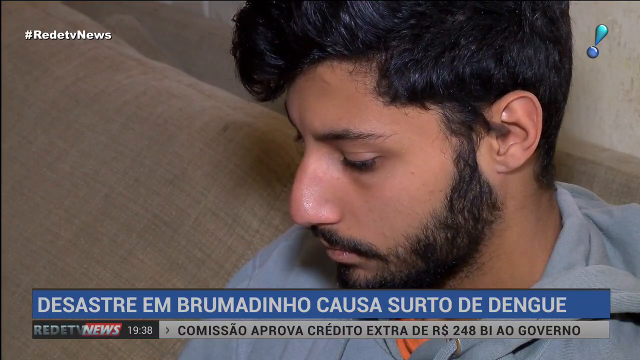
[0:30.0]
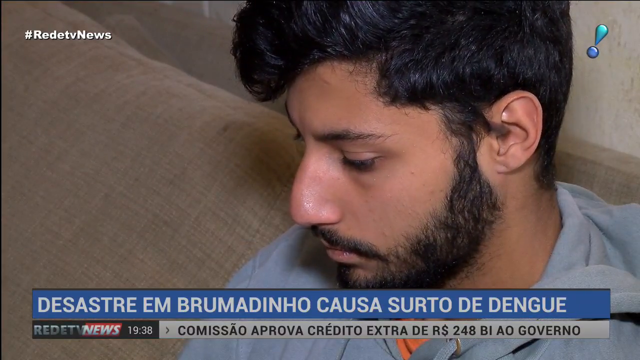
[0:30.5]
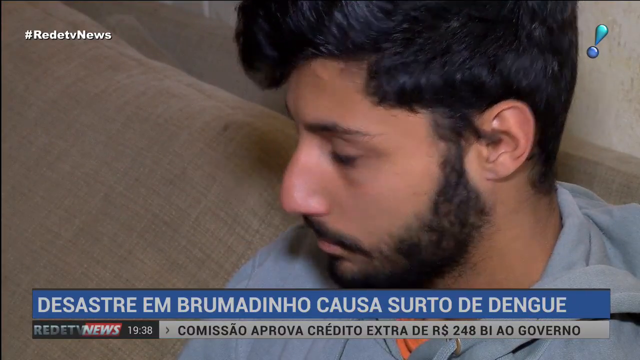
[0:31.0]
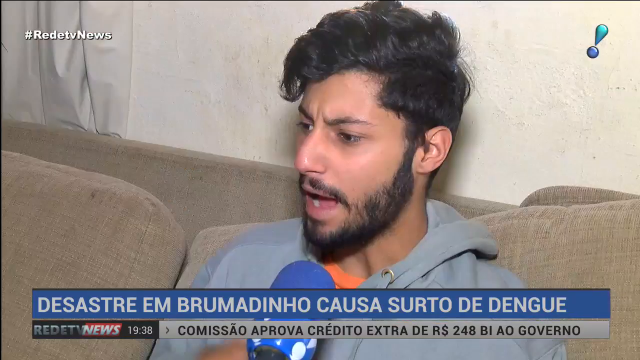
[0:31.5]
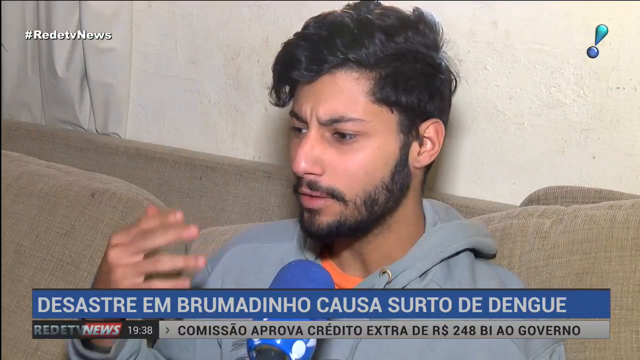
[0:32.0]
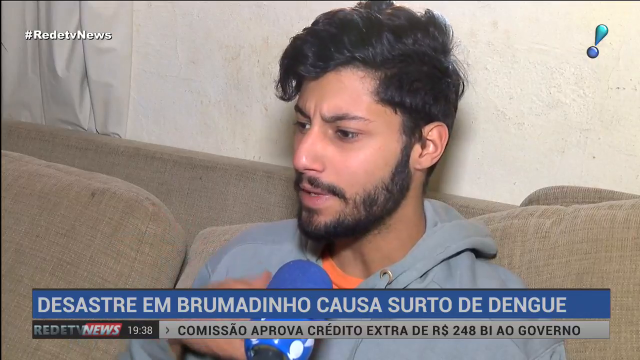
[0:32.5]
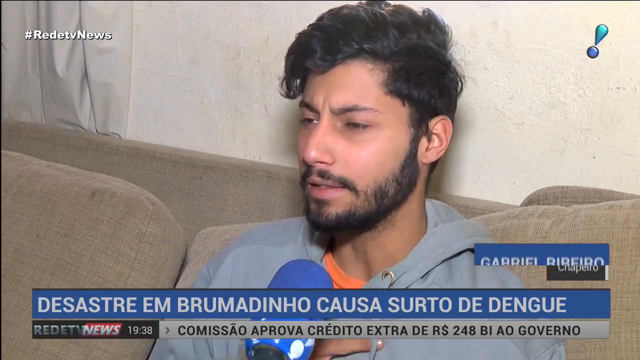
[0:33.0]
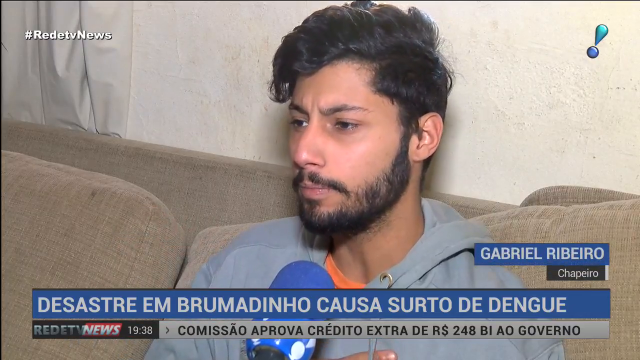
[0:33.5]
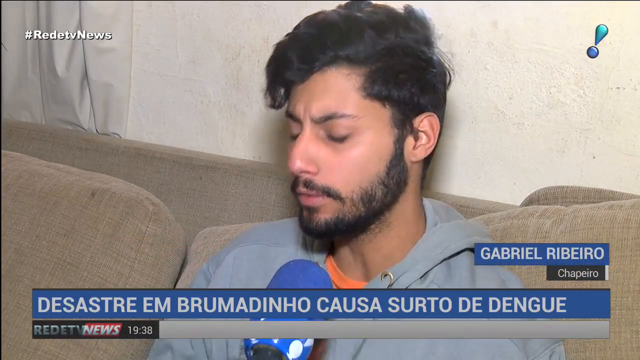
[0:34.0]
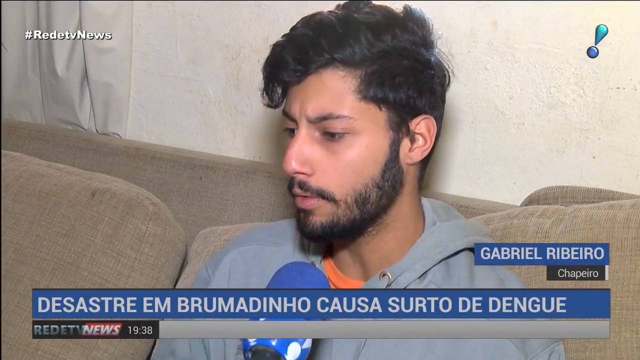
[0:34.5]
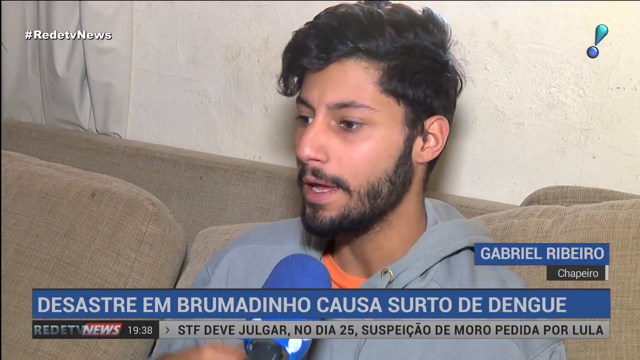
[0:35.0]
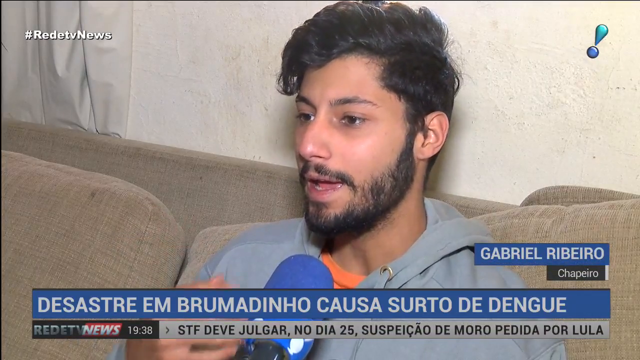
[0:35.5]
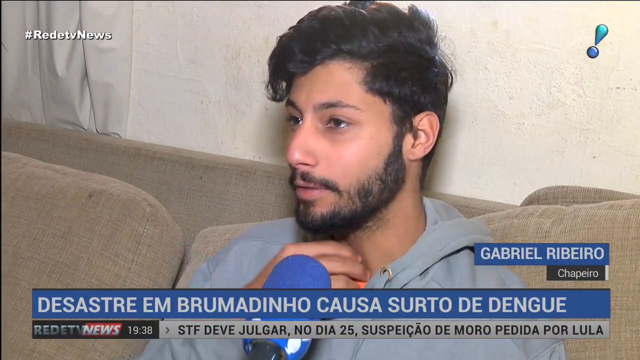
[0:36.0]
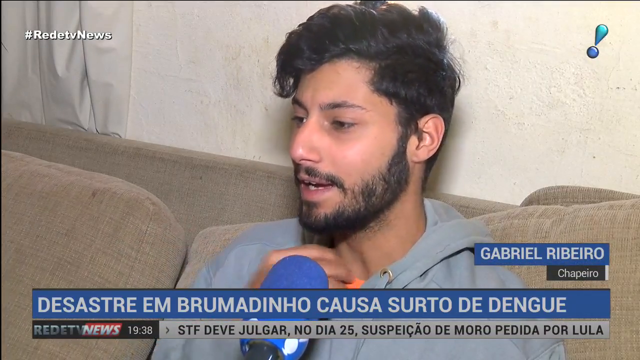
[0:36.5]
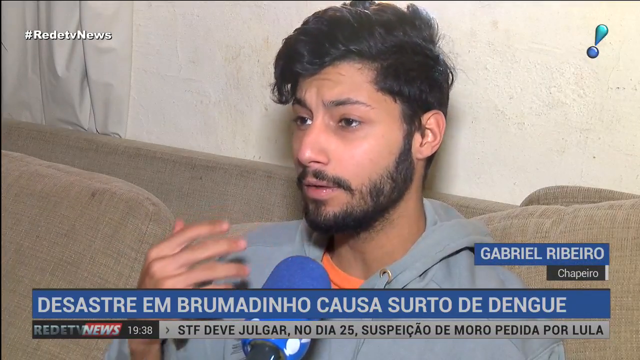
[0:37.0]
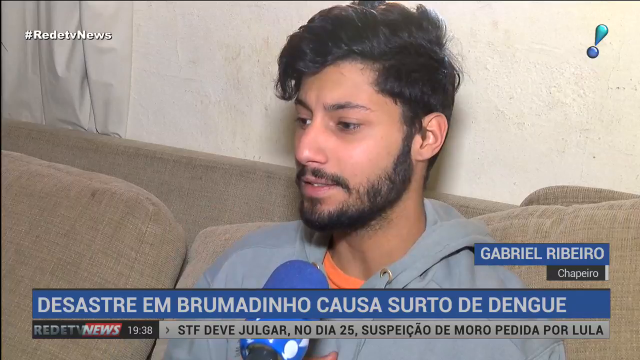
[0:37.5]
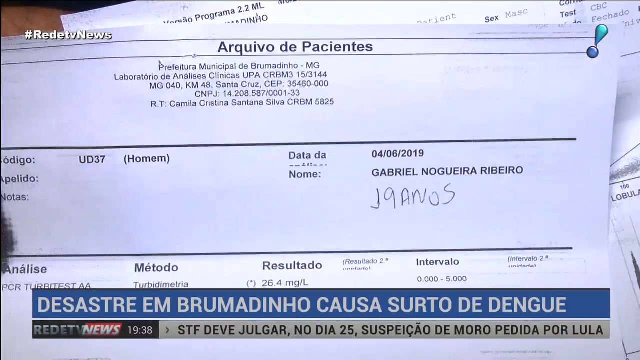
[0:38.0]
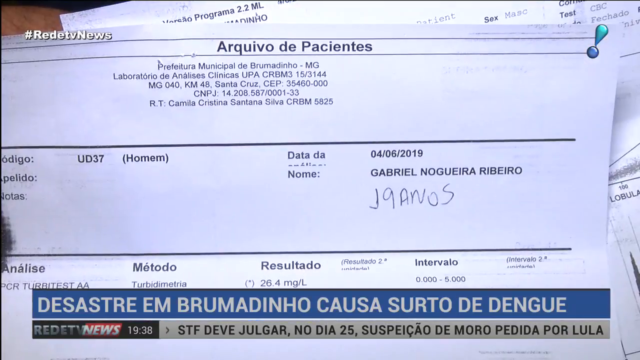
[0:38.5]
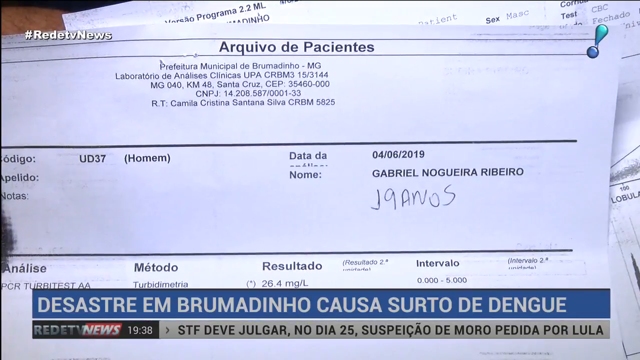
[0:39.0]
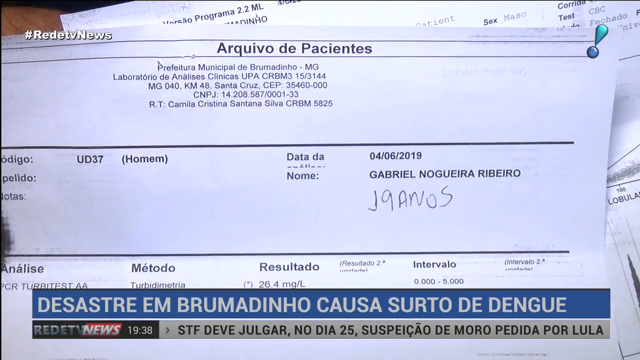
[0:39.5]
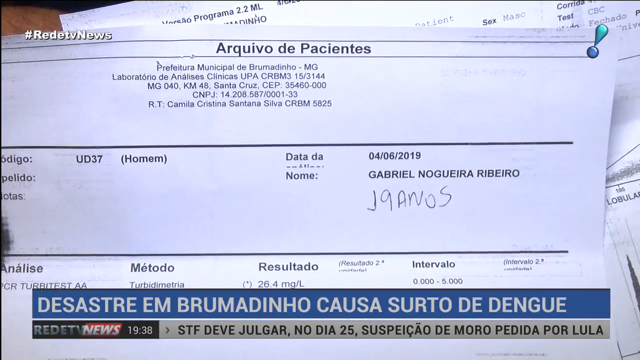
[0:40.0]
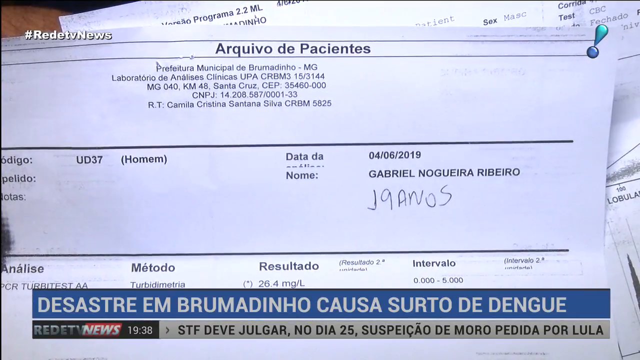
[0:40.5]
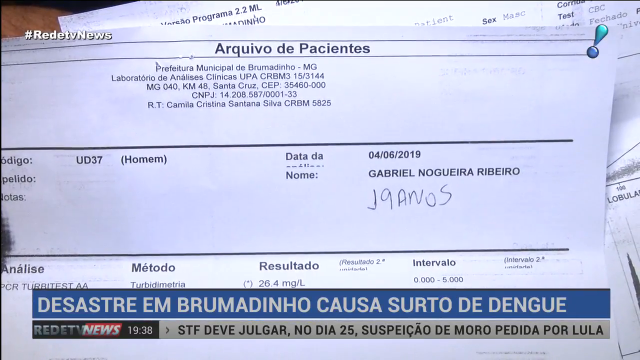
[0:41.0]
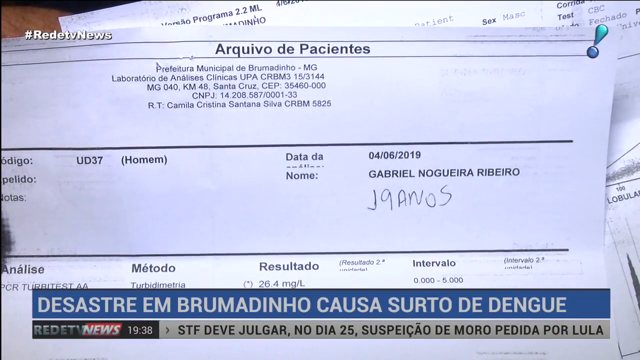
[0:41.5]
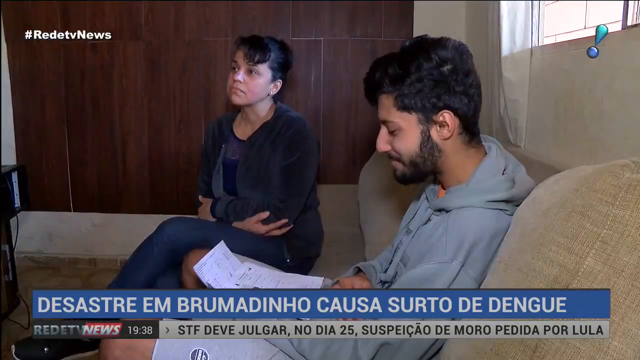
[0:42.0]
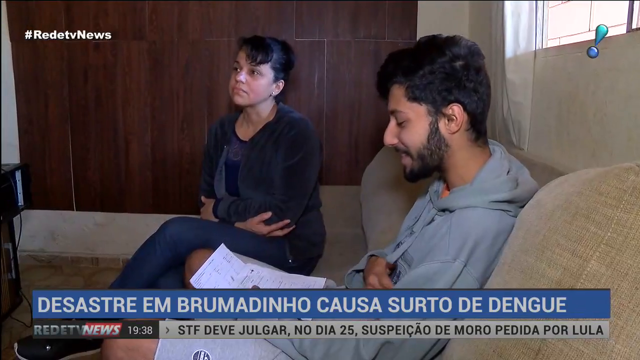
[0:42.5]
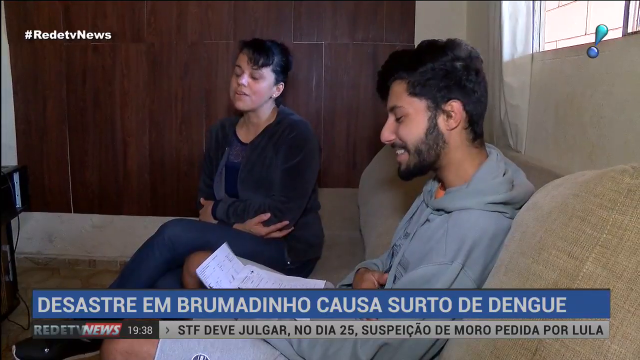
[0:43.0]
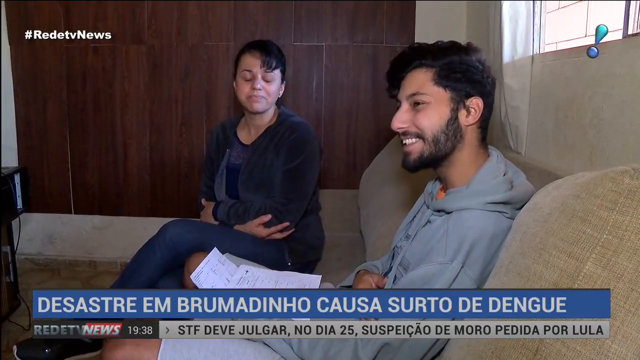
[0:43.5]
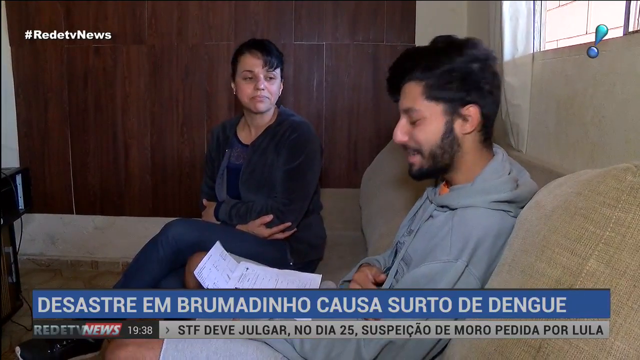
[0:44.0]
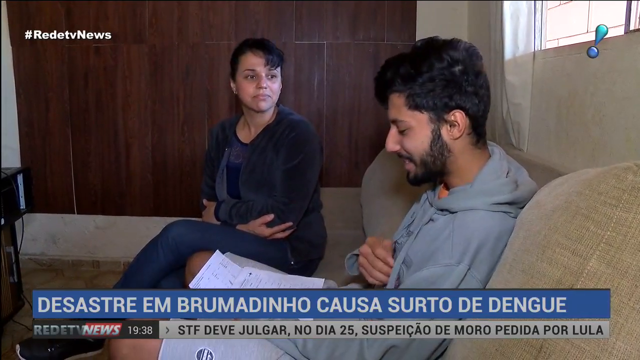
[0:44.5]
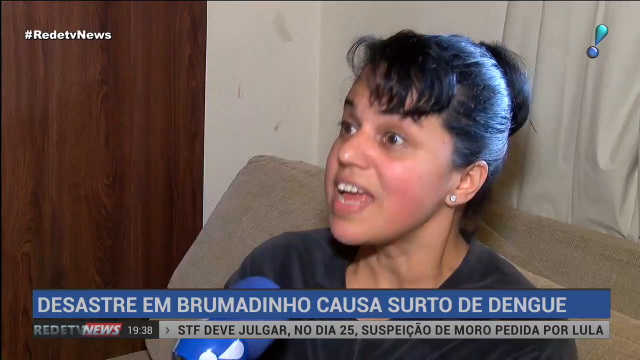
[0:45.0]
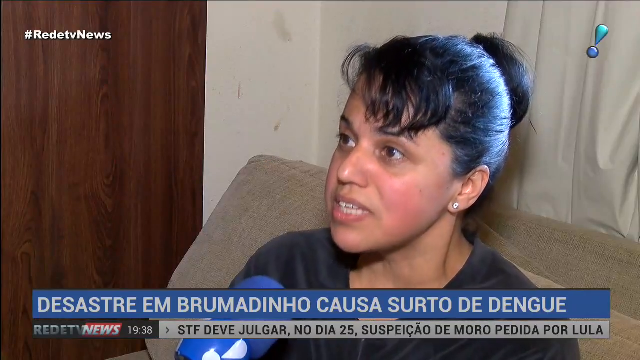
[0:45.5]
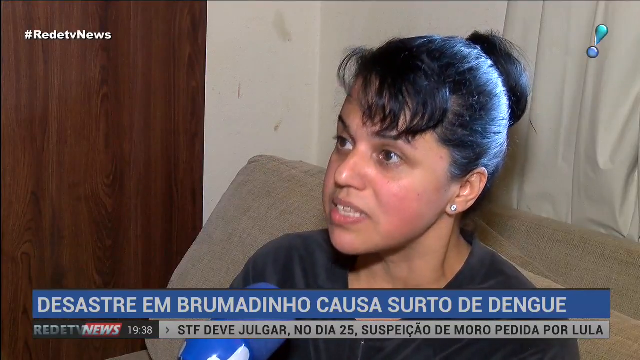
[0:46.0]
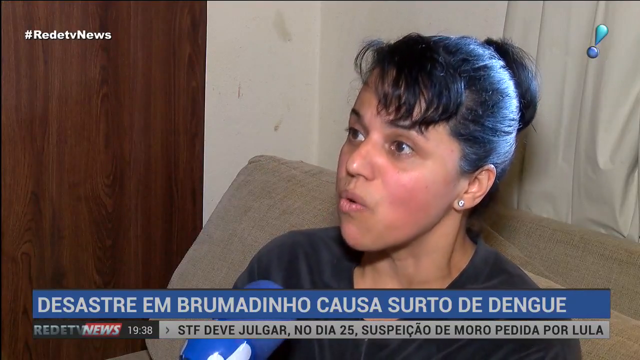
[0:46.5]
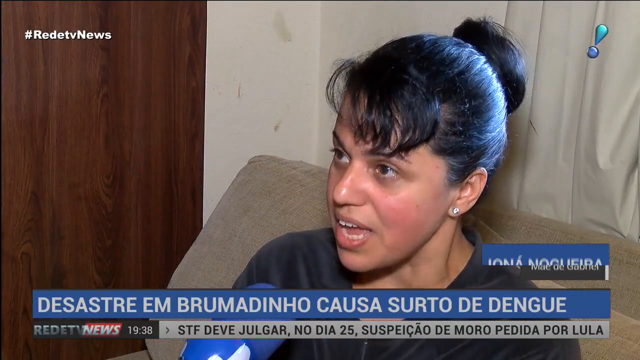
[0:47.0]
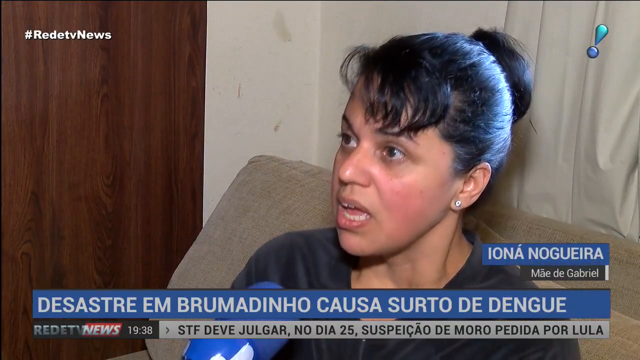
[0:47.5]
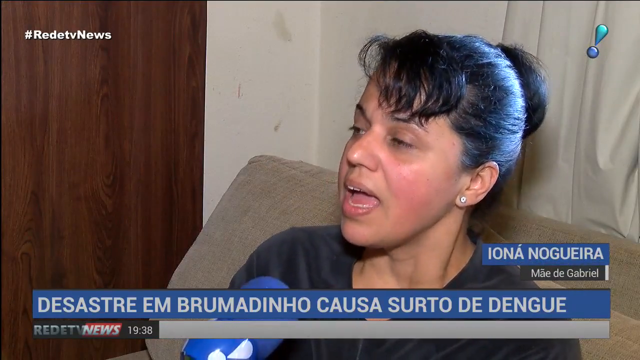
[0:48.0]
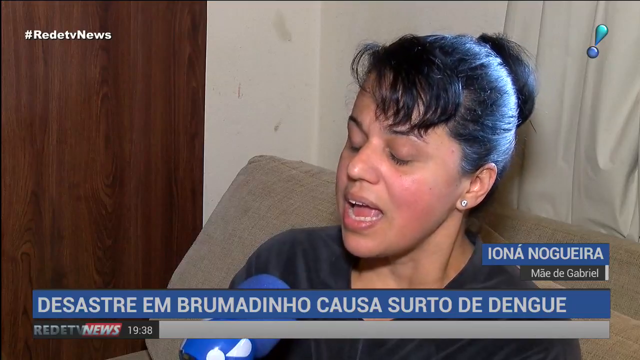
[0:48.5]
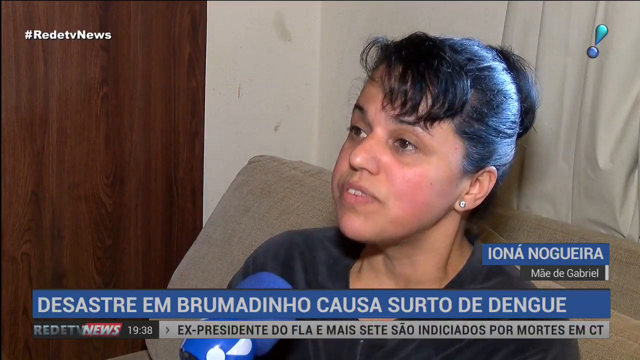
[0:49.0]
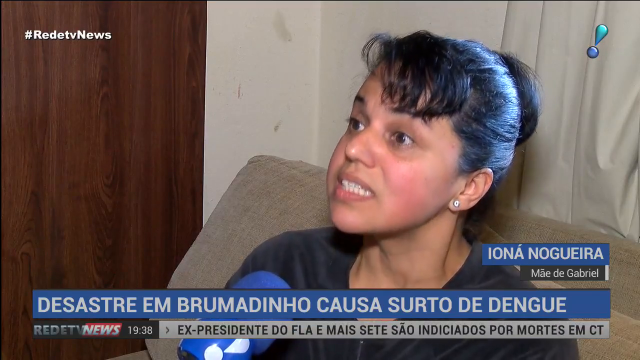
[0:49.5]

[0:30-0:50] The young man, probably in his 20s, is named Gabriel Ribeiro. A piece of paper is shown, possibly a court case document or a driver's license paper. His mother, named Iona, is also there. Text in a different language appears, seemingly including a reference to the president ("El Presidente") and words like "disaster", "Brumadino" and "causa". Gabriel is on a brown couch; he has a beard and a mustache and slightly longer hair that is a little curly on top. His mother wears a blue outfit, and a window is visible behind her. They are in their house, being interviewed by a news reporter who is not shown.